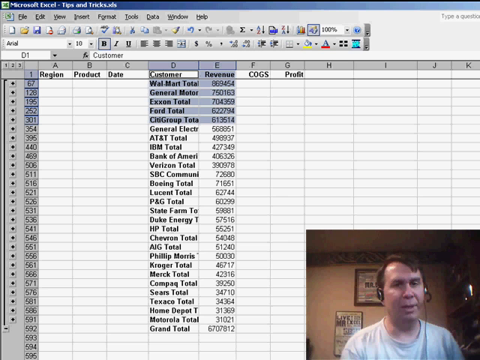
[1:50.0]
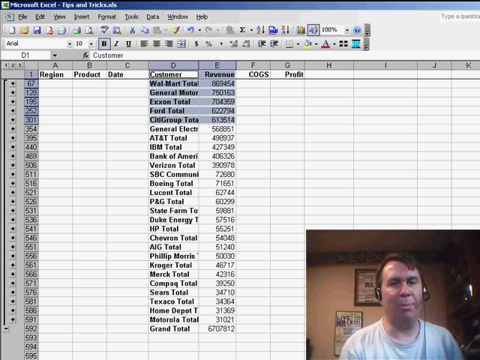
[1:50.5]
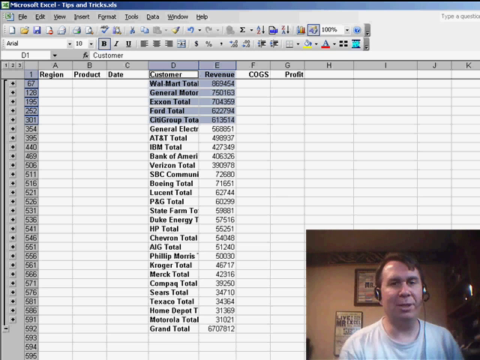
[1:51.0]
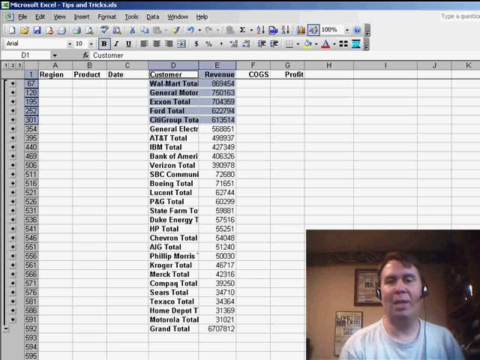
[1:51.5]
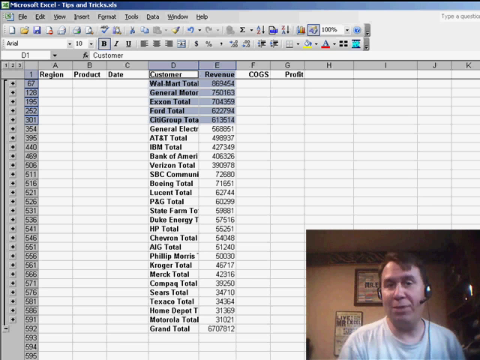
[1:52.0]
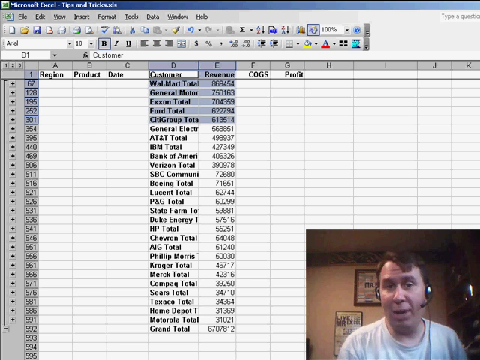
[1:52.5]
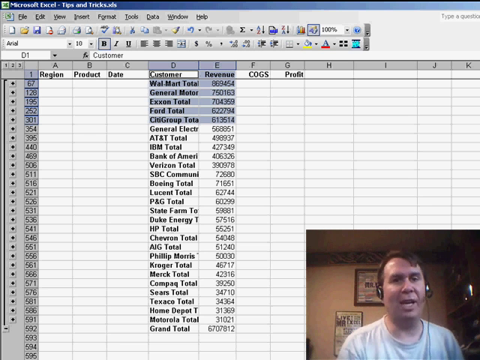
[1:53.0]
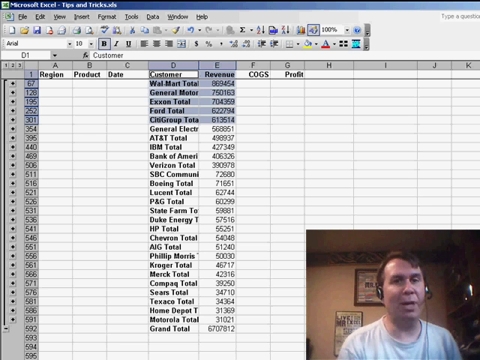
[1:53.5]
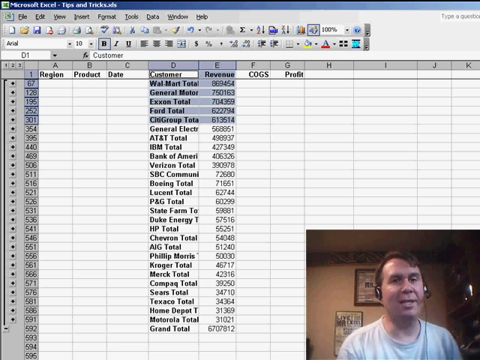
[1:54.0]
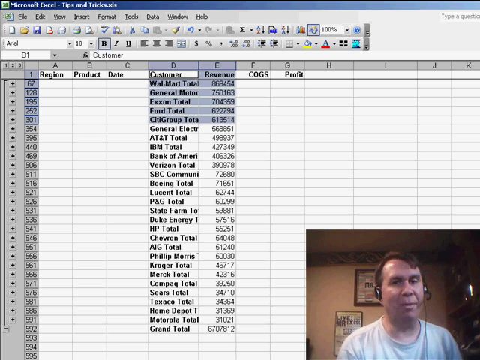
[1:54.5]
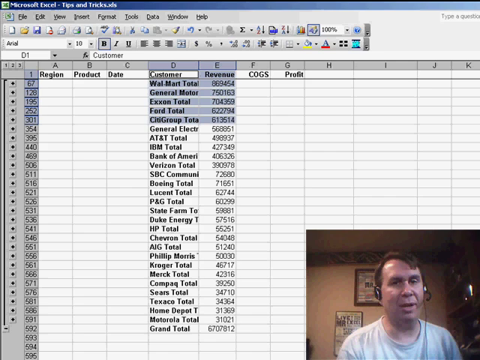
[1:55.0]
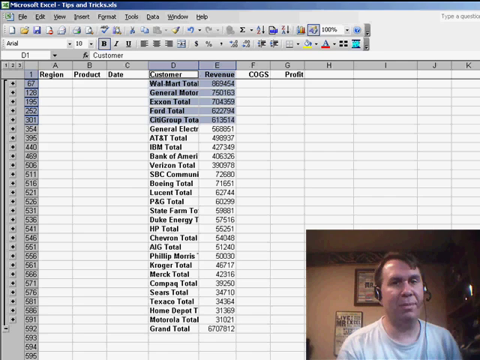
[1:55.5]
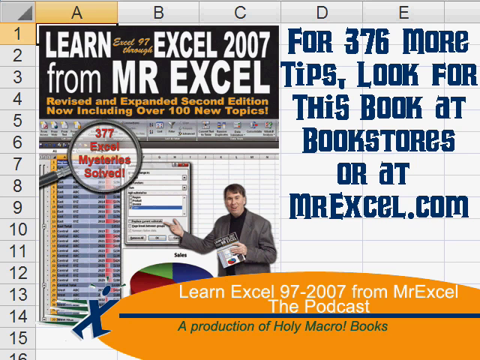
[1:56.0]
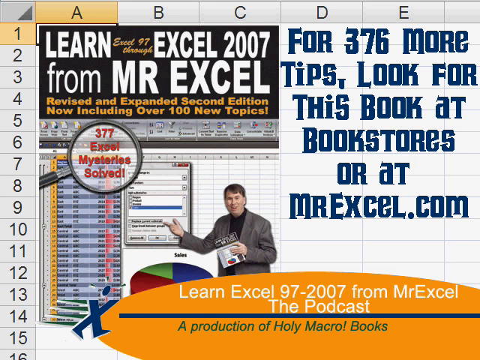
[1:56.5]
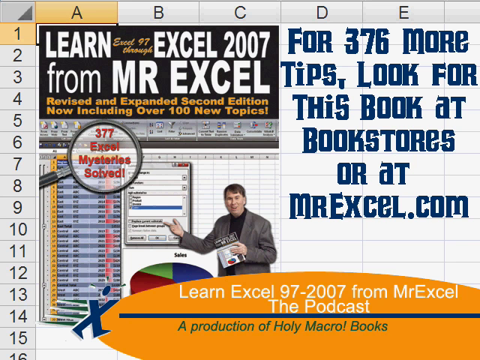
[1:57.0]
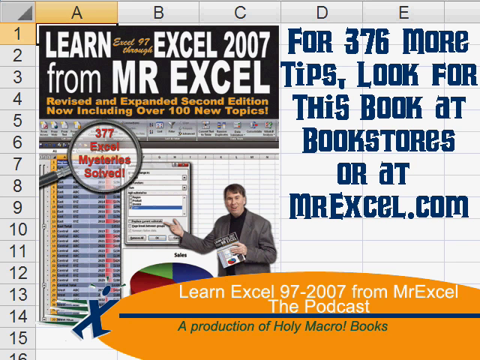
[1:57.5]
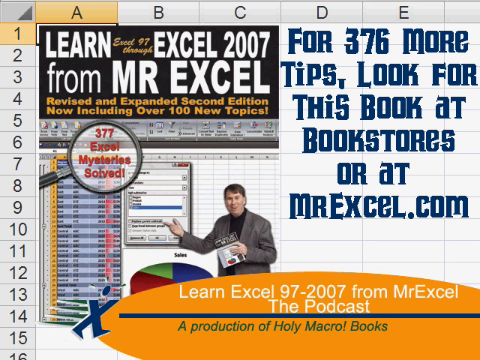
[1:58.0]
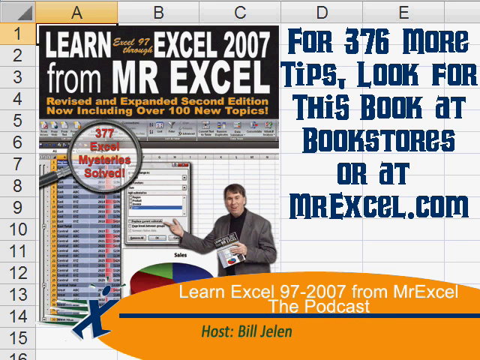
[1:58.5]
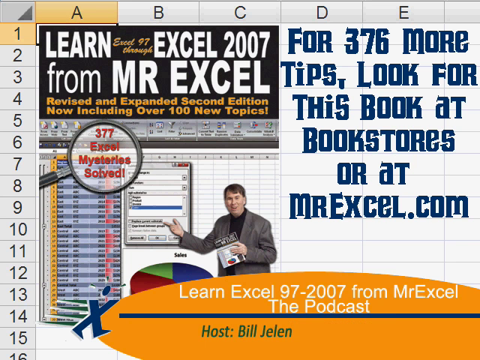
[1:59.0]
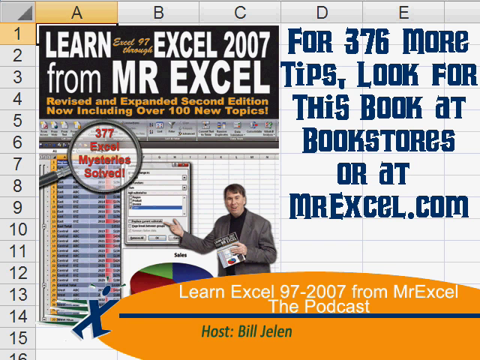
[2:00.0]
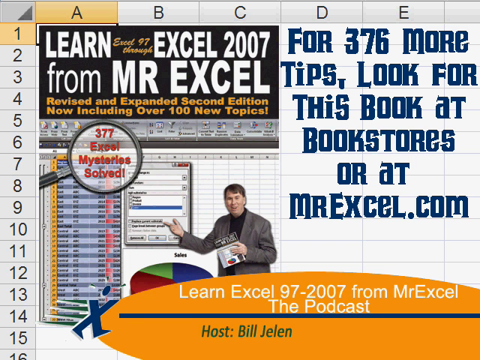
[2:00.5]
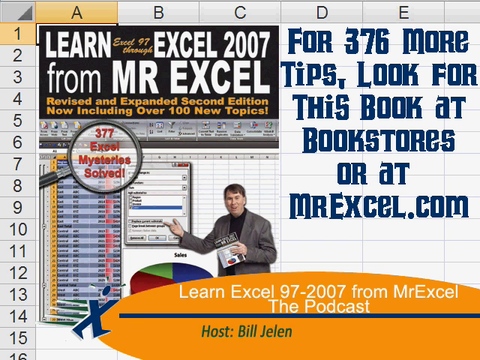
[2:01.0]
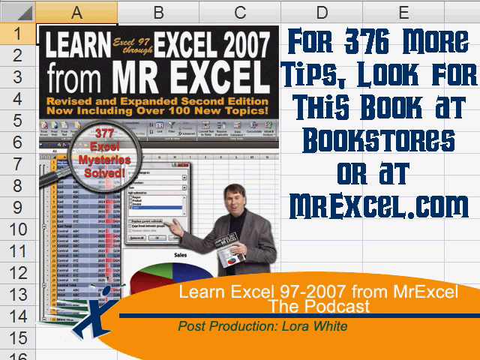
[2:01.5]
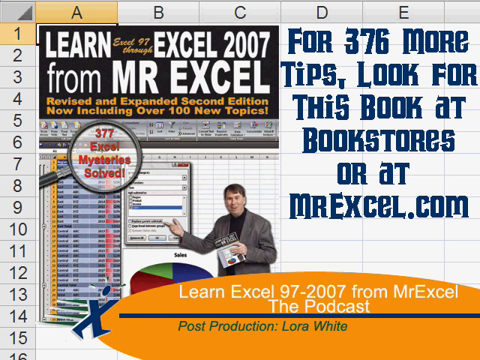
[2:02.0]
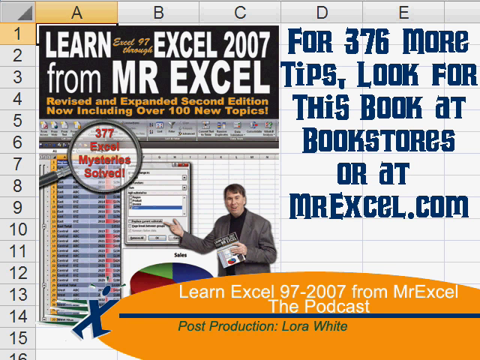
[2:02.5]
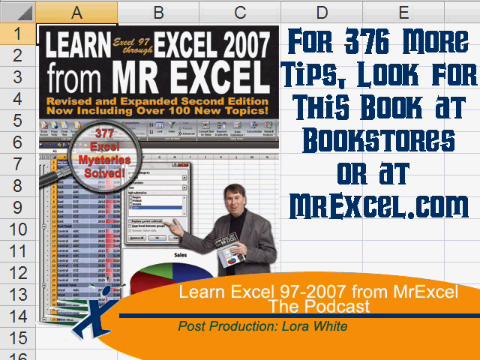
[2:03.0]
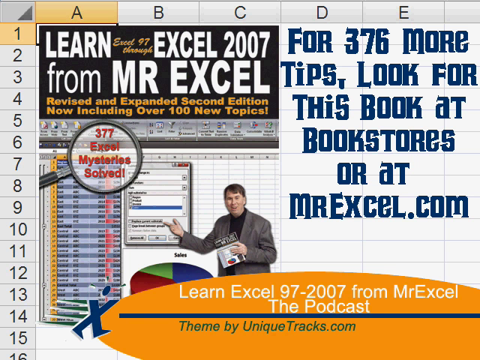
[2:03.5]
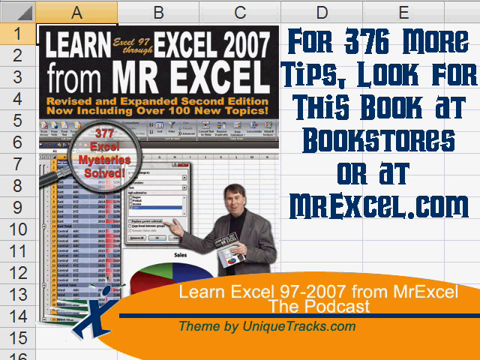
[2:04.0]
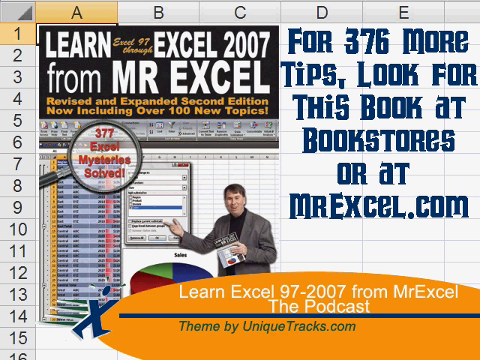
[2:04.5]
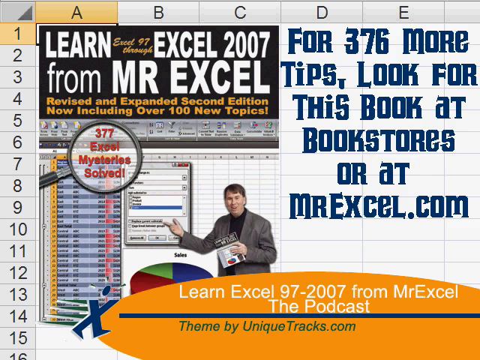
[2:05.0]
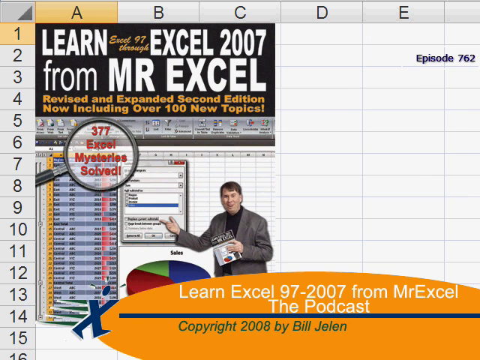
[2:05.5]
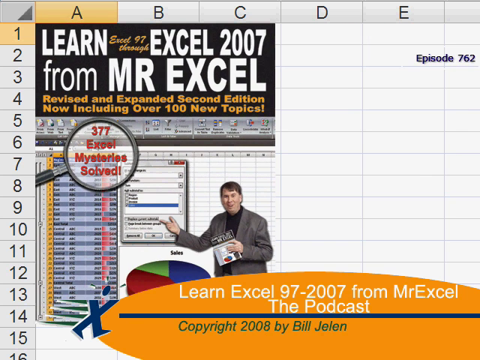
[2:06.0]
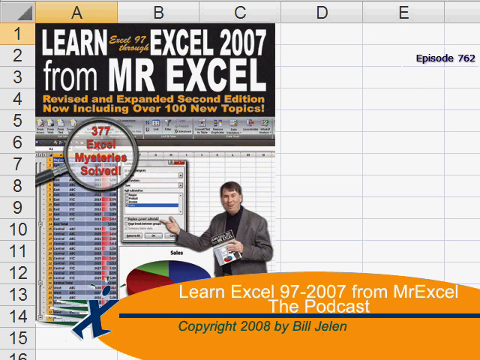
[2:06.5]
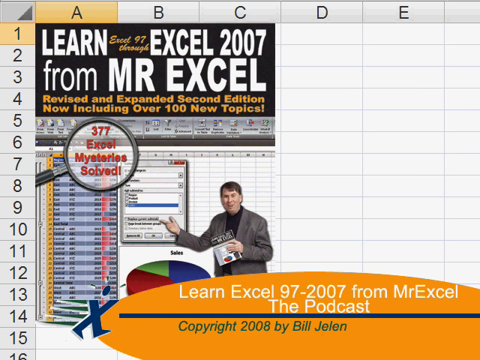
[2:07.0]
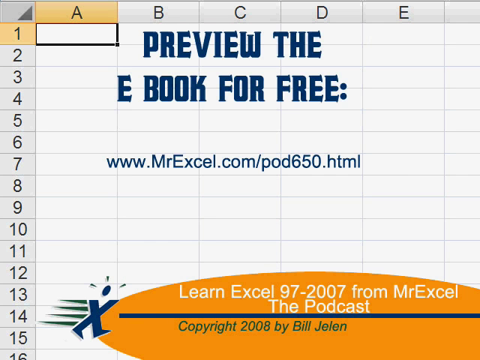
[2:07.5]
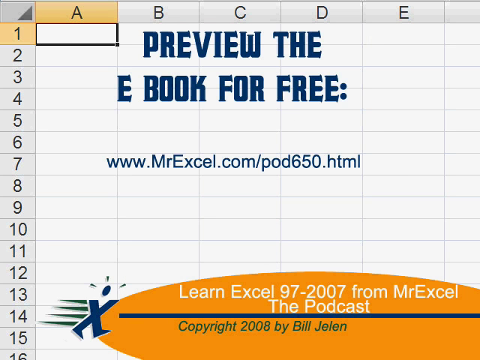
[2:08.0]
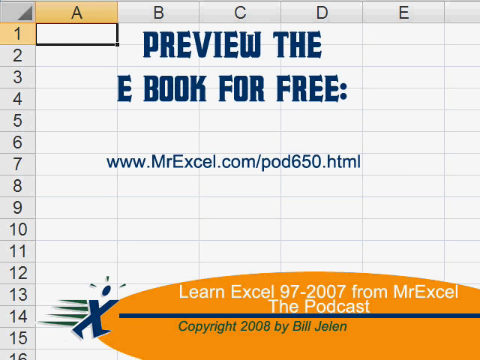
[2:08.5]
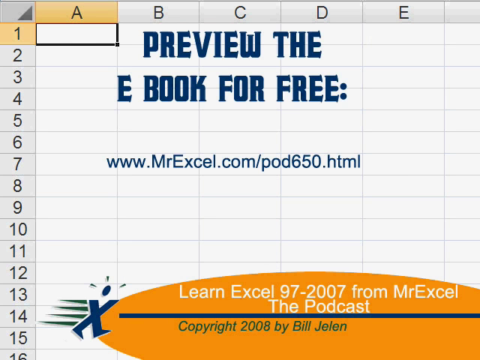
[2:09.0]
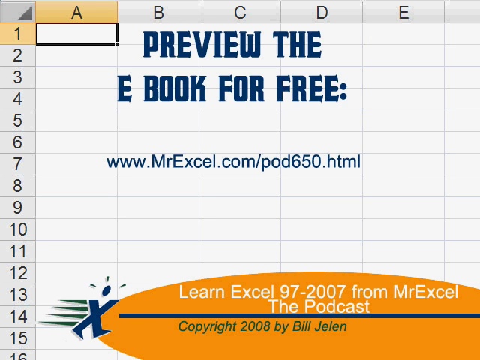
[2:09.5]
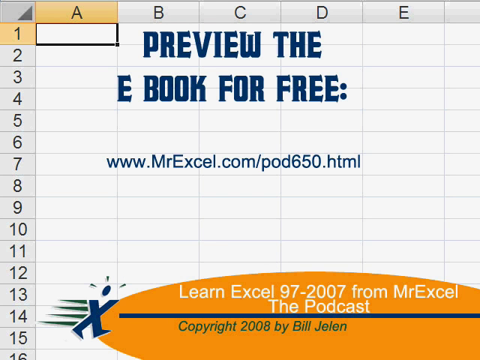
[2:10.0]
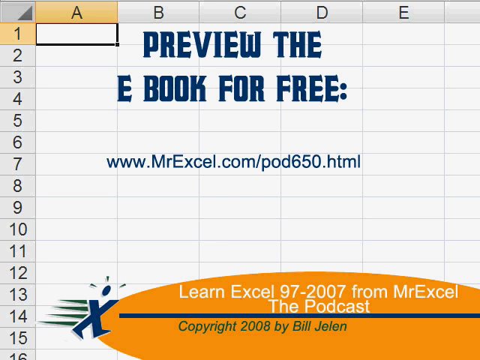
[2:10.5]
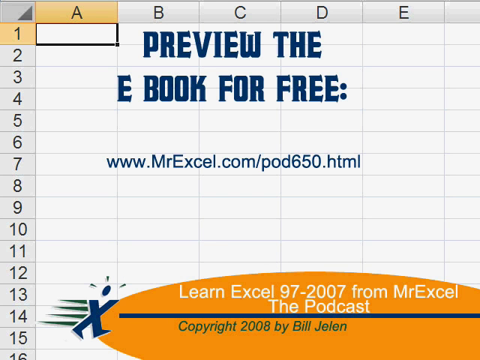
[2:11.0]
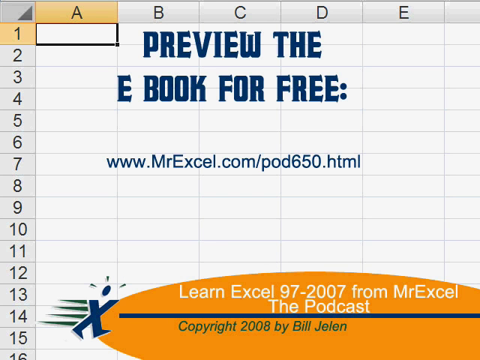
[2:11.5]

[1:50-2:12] The podcaster continues to talk with the spreadsheet in the background. The view very briefly seems to zoom in for a split second before returning to the Mr. Excel ad seen earlier, which clearly shows the same man. This time, on the right of the ad in big blue letters, it reads "for 376 more tips, look for this book at bookstores or at MrExcel.com". The ad is the cover of his book, and below the title it says "revised and extended second edition, now including over 100 new topics".